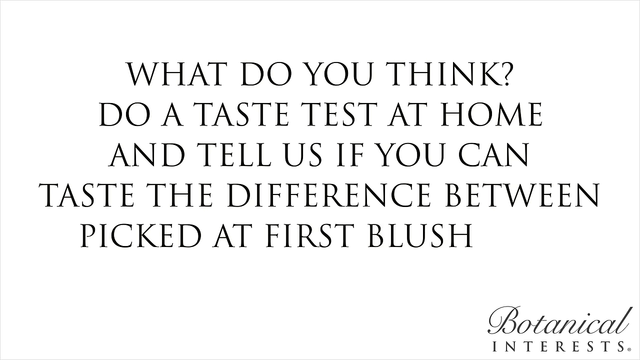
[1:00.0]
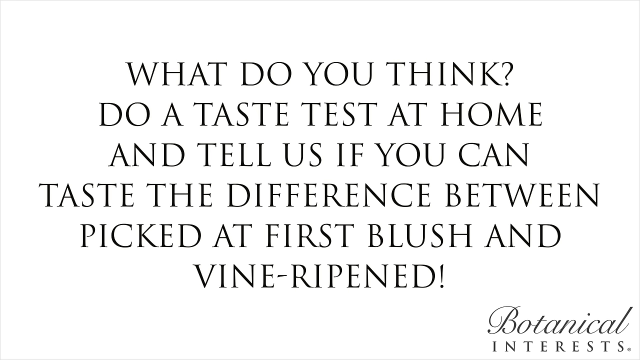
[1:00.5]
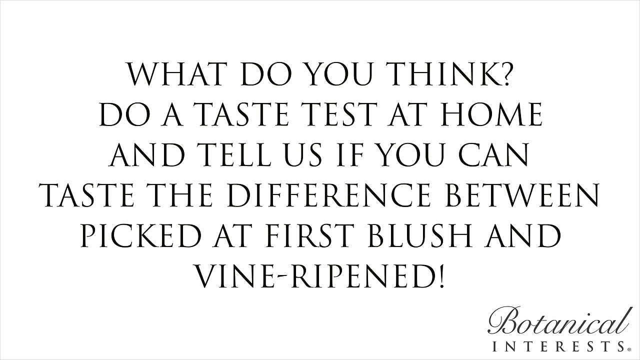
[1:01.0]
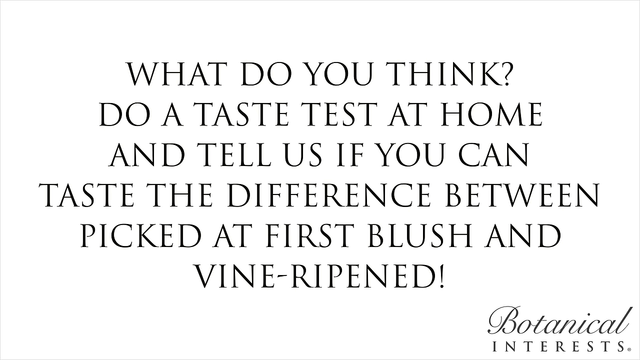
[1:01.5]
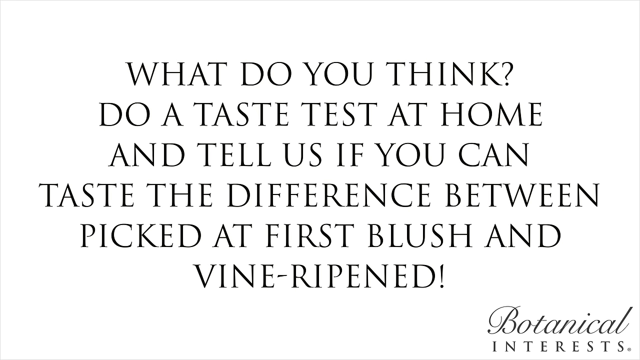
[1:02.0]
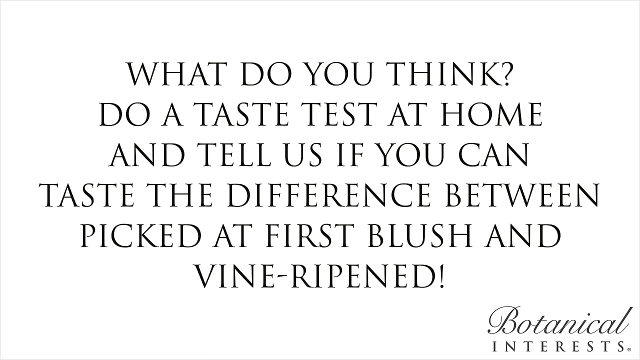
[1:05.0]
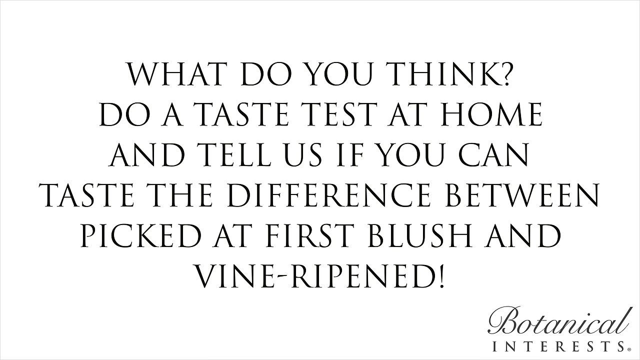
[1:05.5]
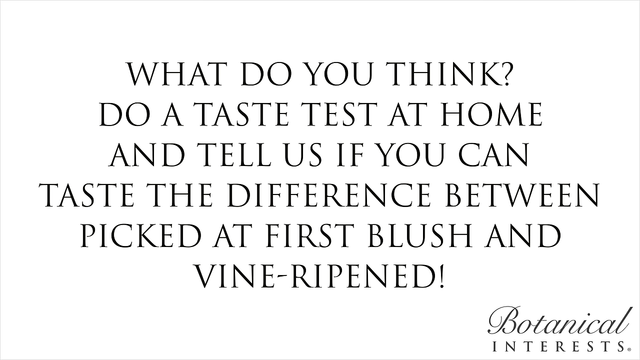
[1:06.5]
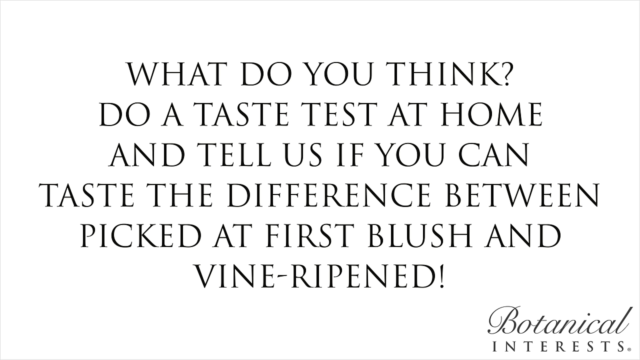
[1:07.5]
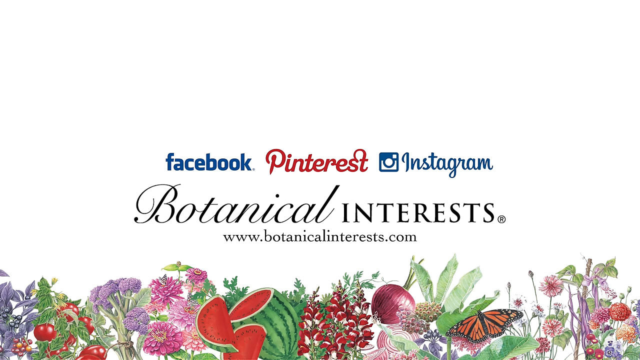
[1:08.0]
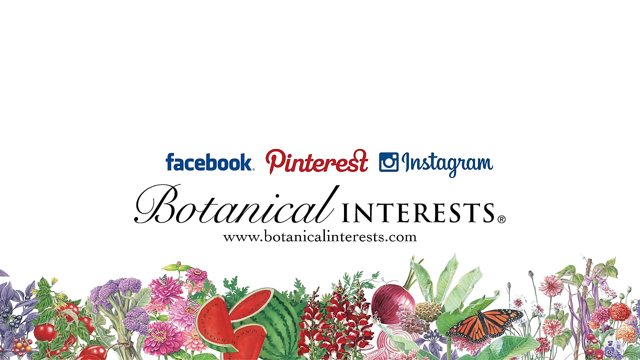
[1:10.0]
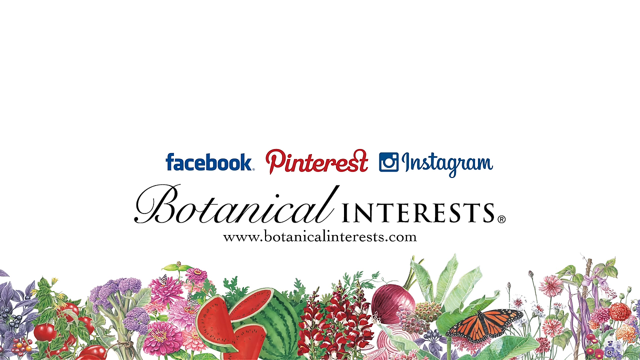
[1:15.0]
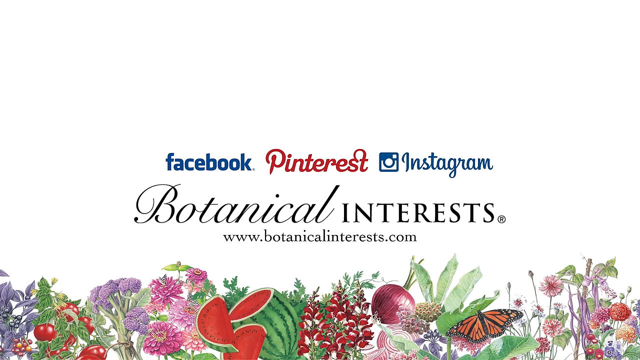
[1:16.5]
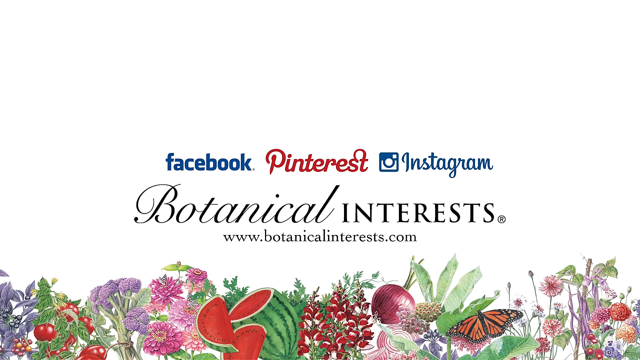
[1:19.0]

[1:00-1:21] A completely white screen appears, and text shows up on it almost as if being typed out, each word appearing one after the other. In a black capital font, it reads "what do you think? do a taste test at home and tell us if you can taste the difference between picked at first blush and vine ripened". The screen then changes to another almost white background with what are kind of like watercolour pictures of different fruits and flowers, including watermelons and berries, at the bottom. Across the middle of the screen is the Botanical Interests logo, with the web address "www.botanicalinterest.com" underneath it. Above the logo are three social media logos: Facebook, Pinterest and Instagram.